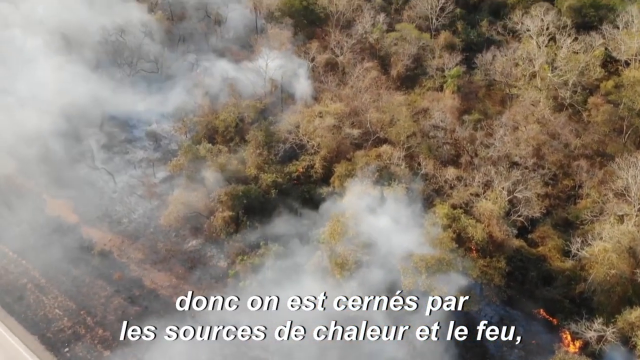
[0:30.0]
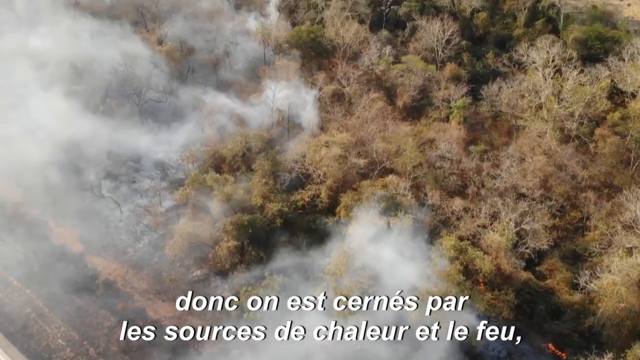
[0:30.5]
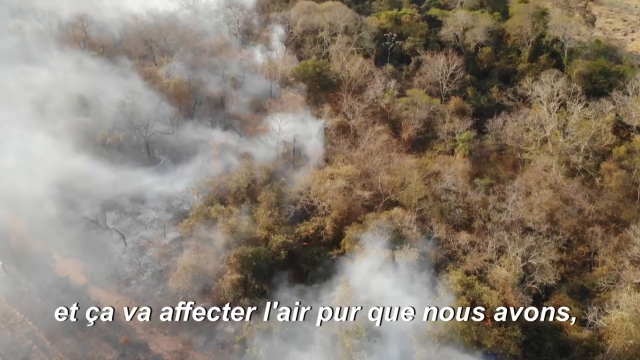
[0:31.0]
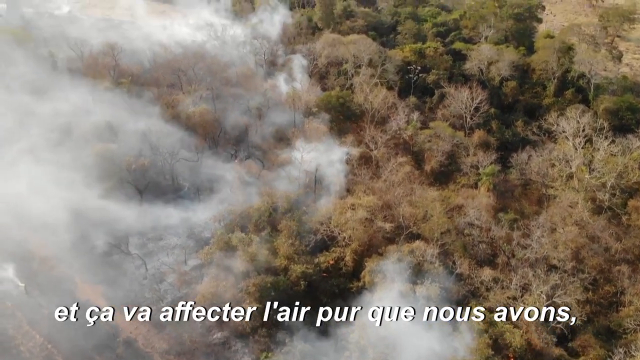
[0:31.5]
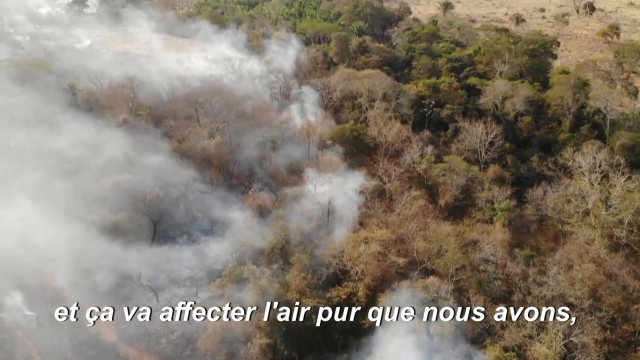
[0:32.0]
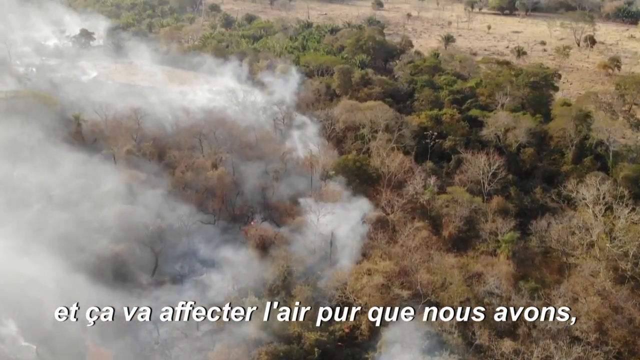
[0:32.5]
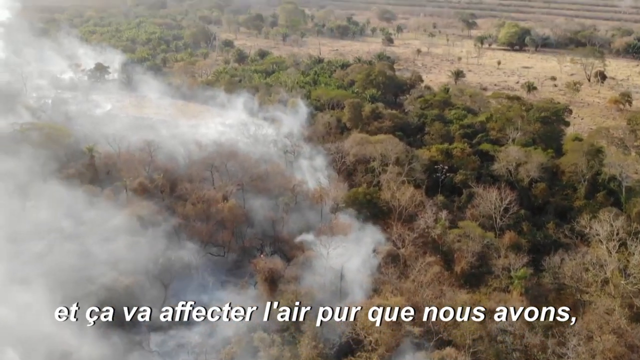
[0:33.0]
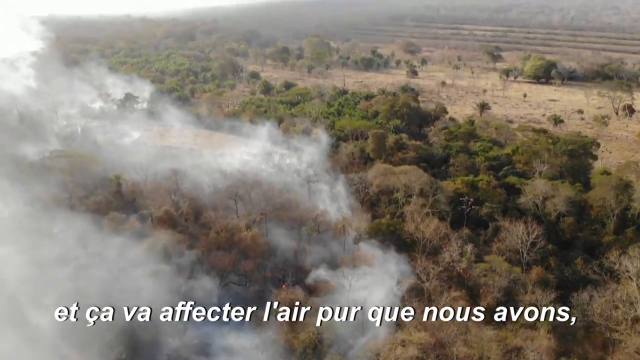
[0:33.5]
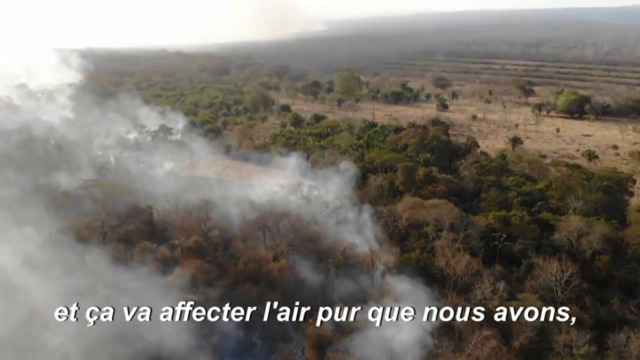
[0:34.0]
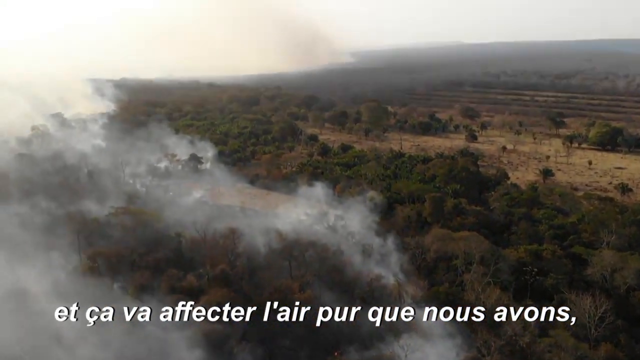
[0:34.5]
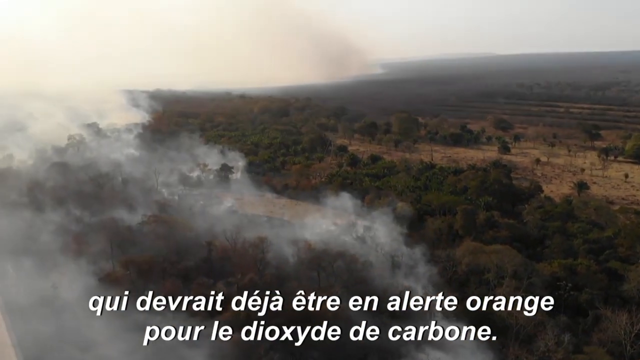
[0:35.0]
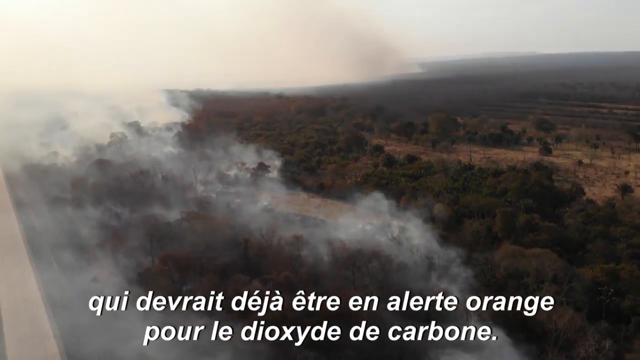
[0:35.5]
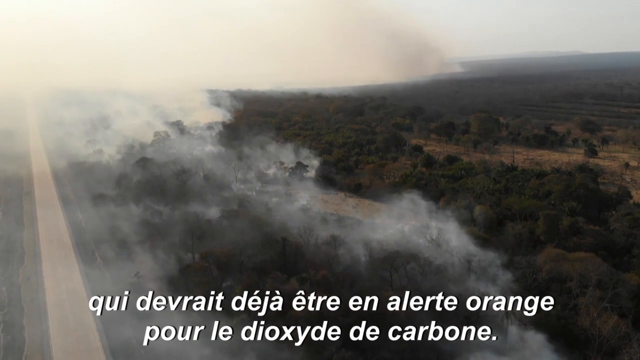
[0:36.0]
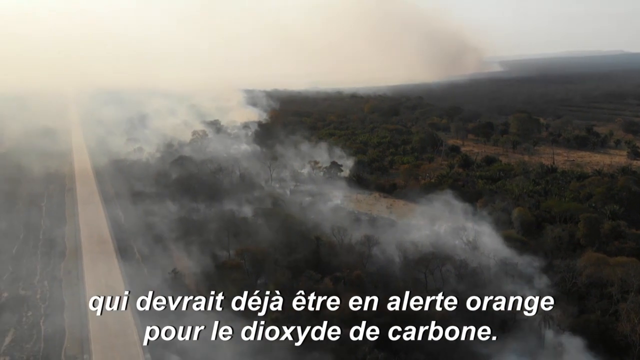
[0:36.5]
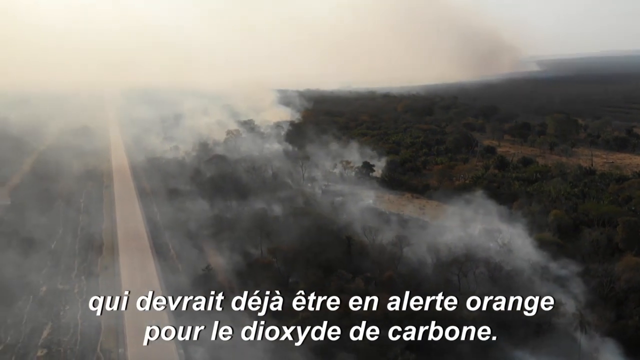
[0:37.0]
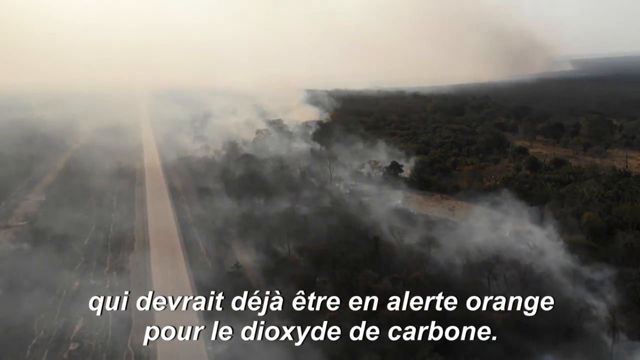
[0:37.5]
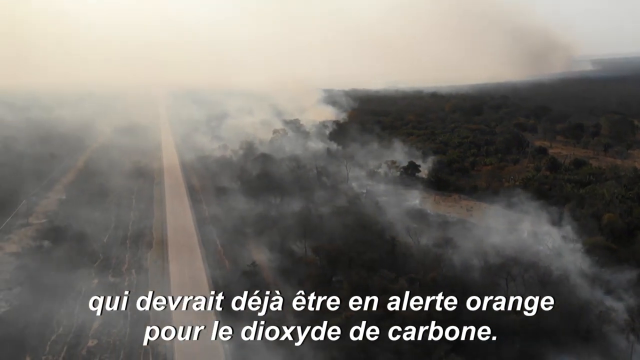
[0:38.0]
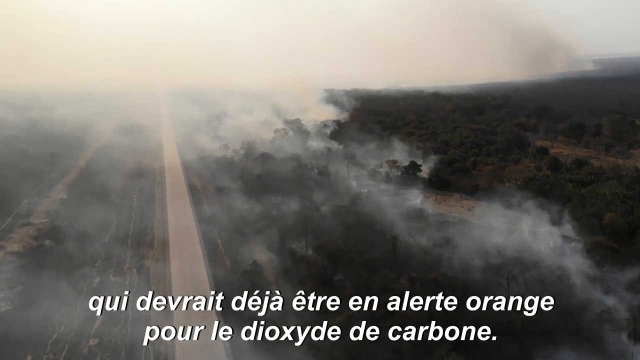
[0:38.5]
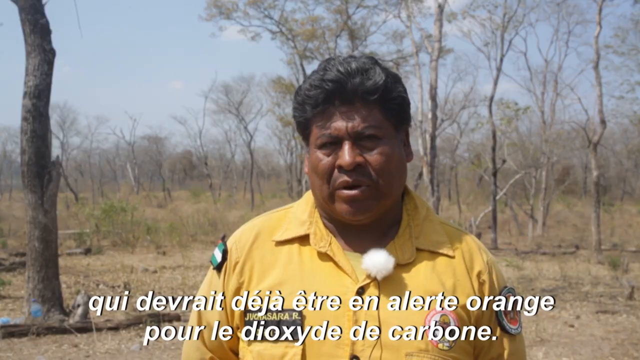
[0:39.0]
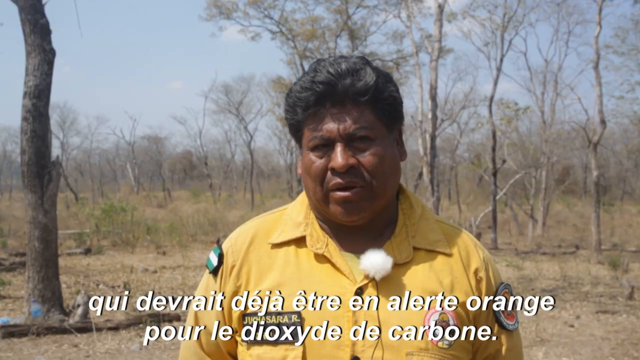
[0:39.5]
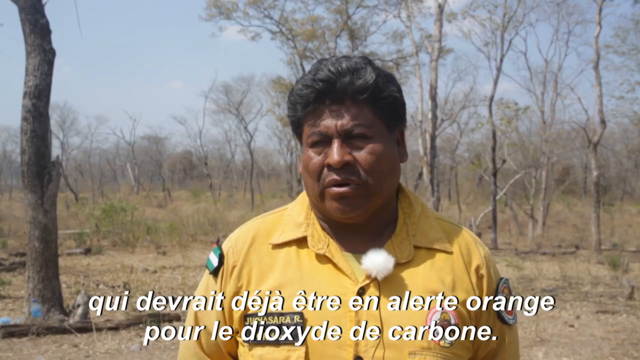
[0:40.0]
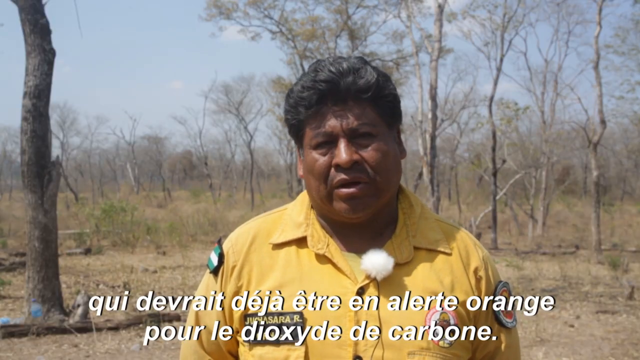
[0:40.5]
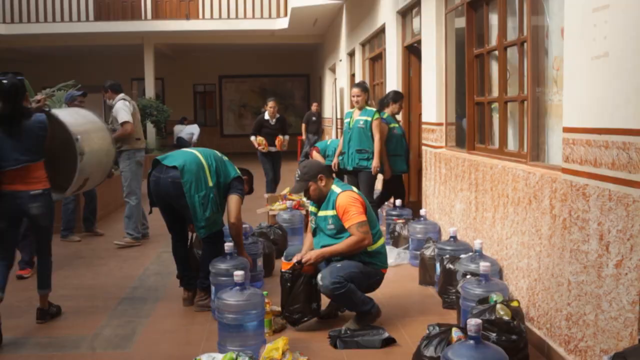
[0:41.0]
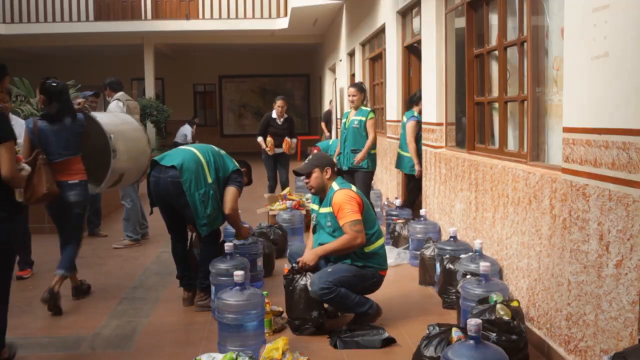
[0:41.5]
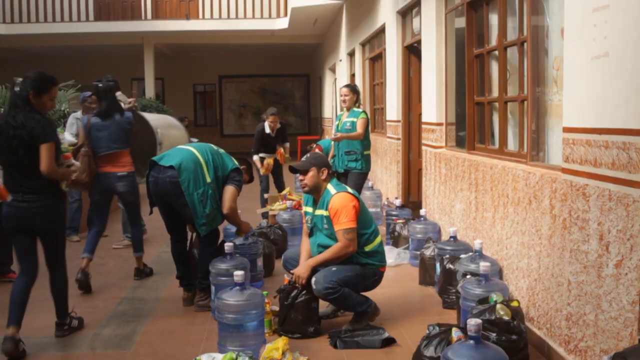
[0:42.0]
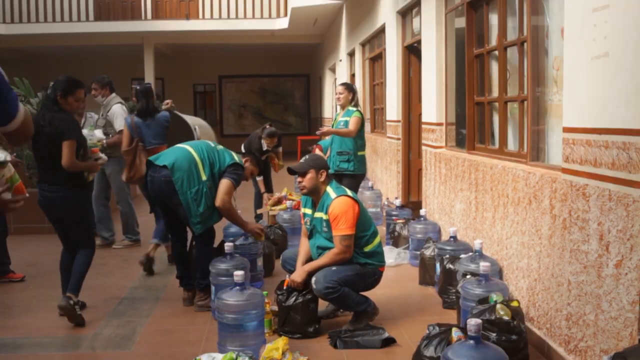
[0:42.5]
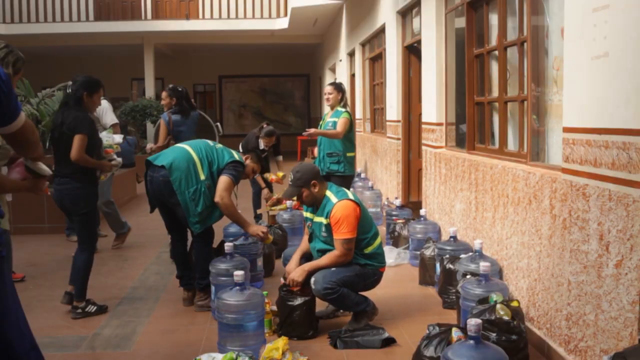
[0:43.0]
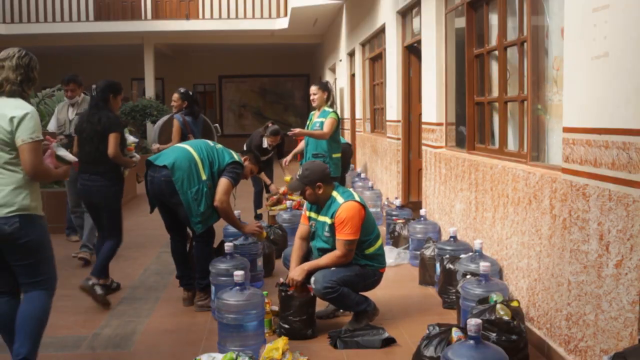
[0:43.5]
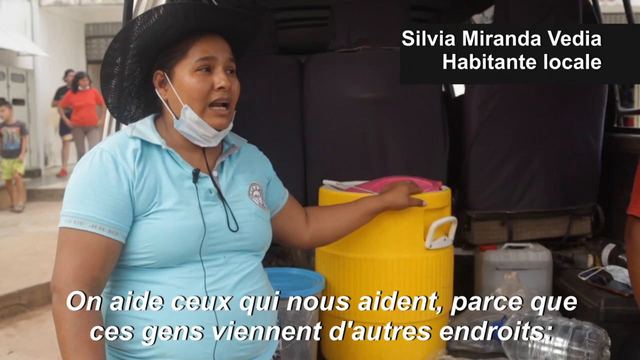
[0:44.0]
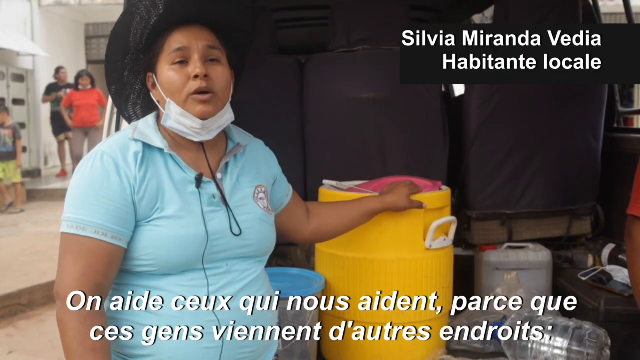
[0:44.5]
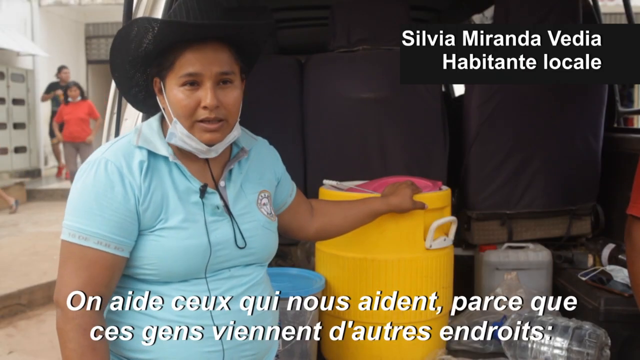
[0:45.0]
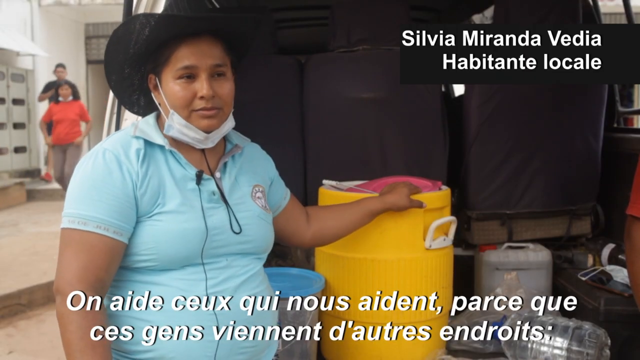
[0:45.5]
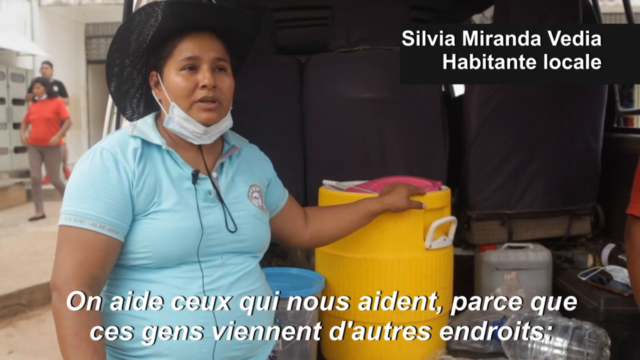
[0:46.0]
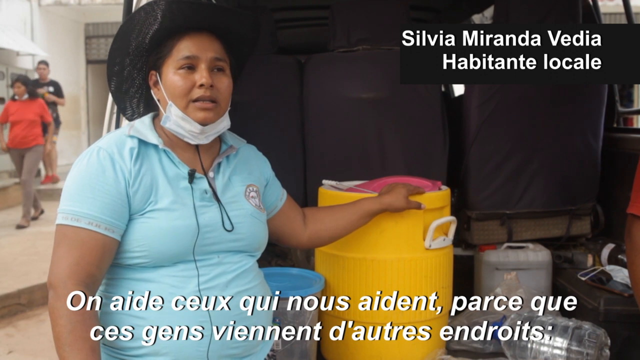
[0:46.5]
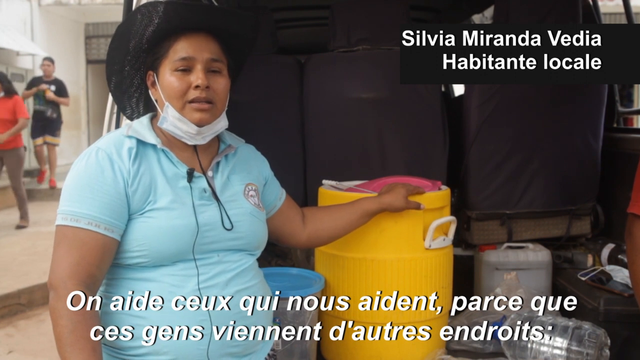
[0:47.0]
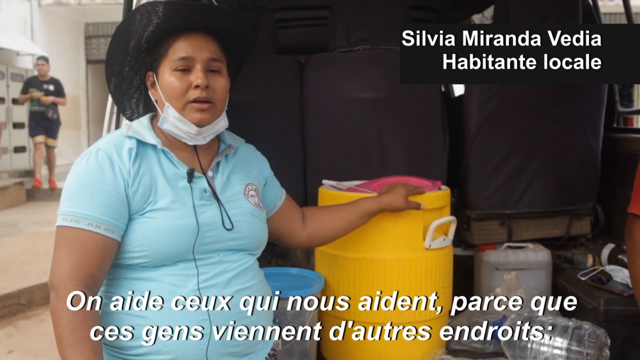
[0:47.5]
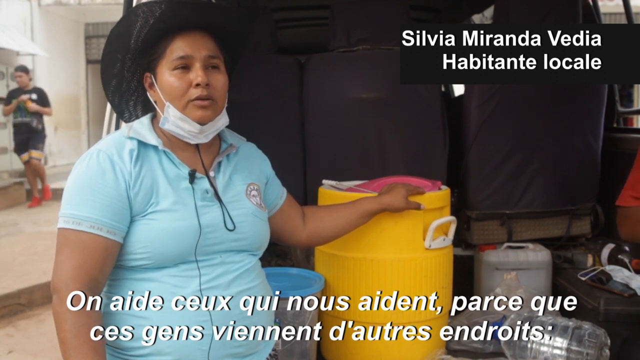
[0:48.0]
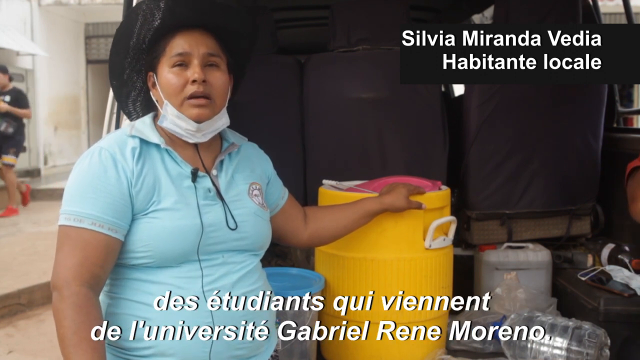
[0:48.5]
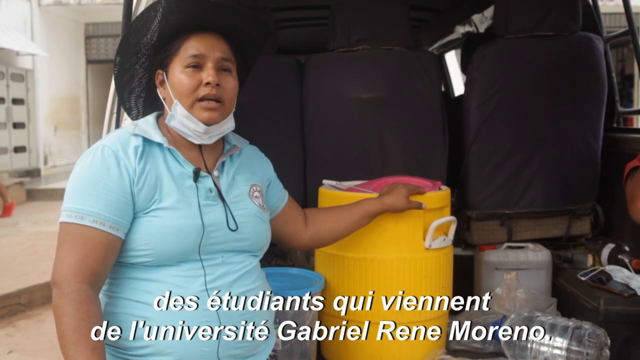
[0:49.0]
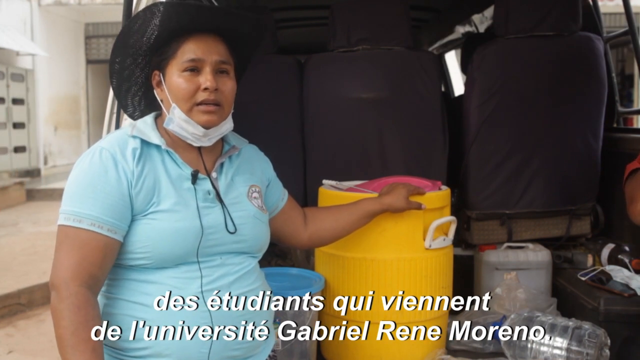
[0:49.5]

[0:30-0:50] The aerial view of the forest continues, with a lot of smoke, and the fire is seen for quite some time, showing how vast it has spread. There seems to be either a road or a river in the middle, possibly a river, maybe the Amazon. The video cuts back to Roberto, still wearing a yellow-collared button-up shirt, with a flag patch on his right arm and a patch of something on his left arm. He stands in the same spot and appears to be being interviewed. Next, a group of people walk around in what appears to be a building. Three people wear green vests with yellow stripes; they appear to be two males and one female. One of the males wears an orange shirt underneath and a black hat. All three wear jeans. One leans over and touches a water jug of the kind usually used for coolers. The man in the hat squats down, and the woman appears to be giving direction. Another woman in black behind her looks like she has food in her hand and might be putting it in a box. There are quite a few water jugs, at least ten. The other people walk around carrying things. Then a woman is interviewed; her name appears as "Sylvia Miranda", and she appears to be a local. She wears a blue collared button-up polo shirt, a mask pulled down past her chin, and what appears to be a black hat. Her left hand is on a big yellow container of the kind that usually holds water. She seems to be sitting in a car or van, maybe in the back, as seats apparently appear behind her. In the background, two people, a woman and a man, one in an orange shirt and one in a black dress or shirt, stand there during the interview and then walk past the camera.